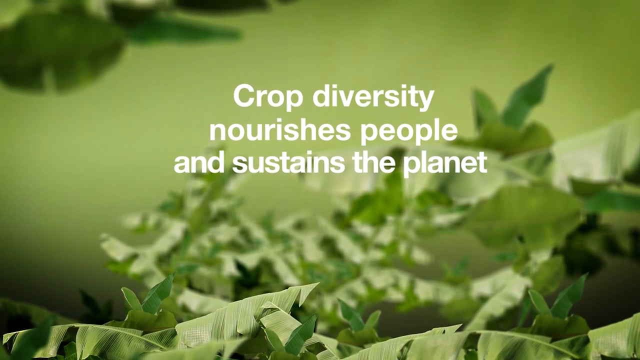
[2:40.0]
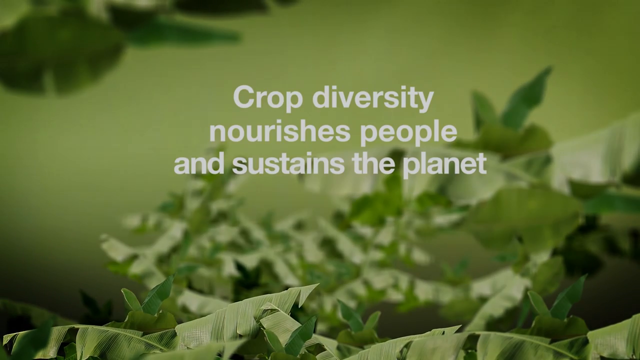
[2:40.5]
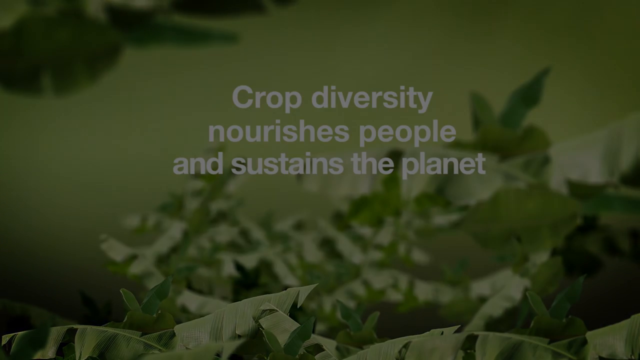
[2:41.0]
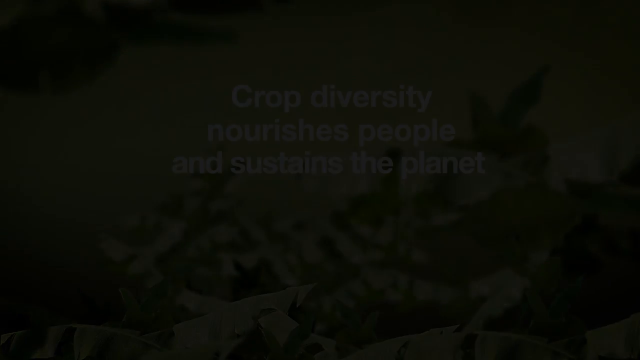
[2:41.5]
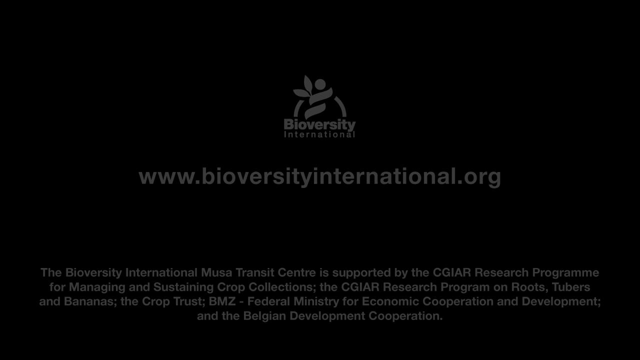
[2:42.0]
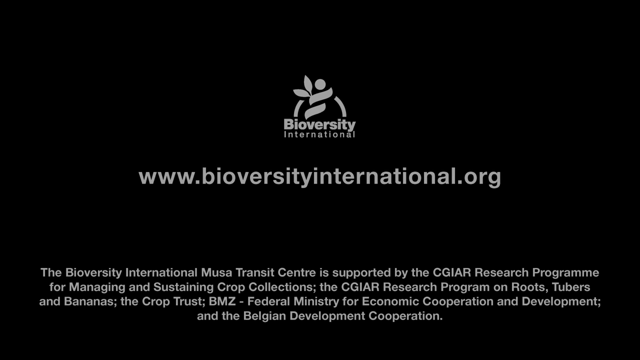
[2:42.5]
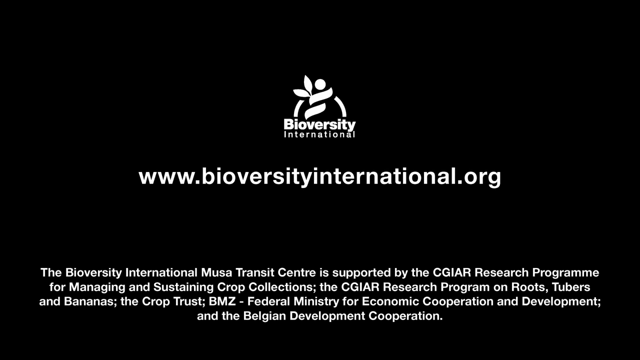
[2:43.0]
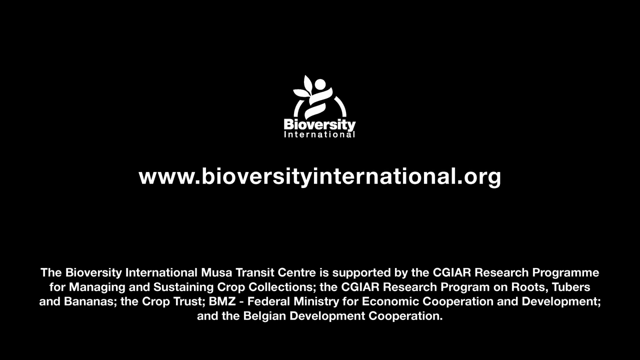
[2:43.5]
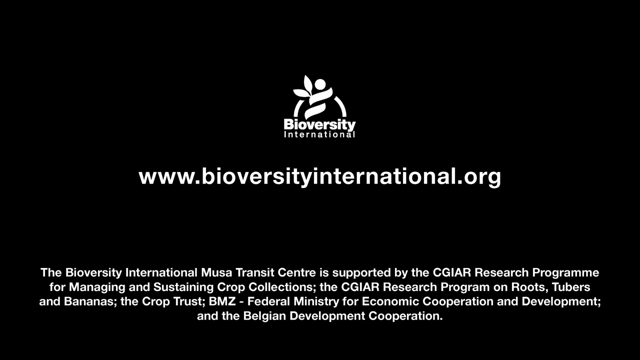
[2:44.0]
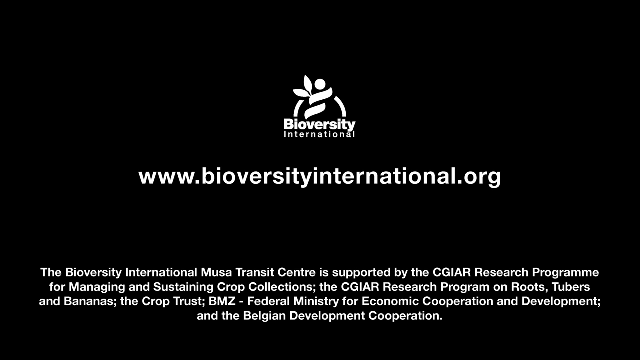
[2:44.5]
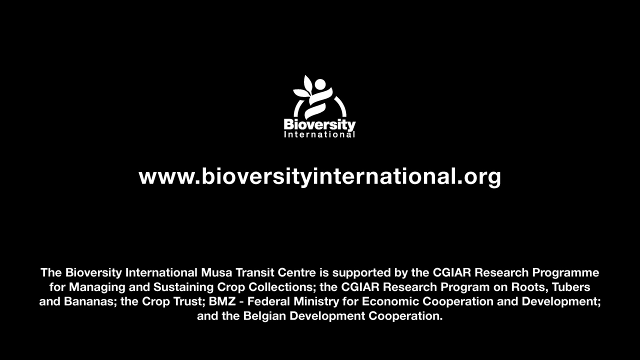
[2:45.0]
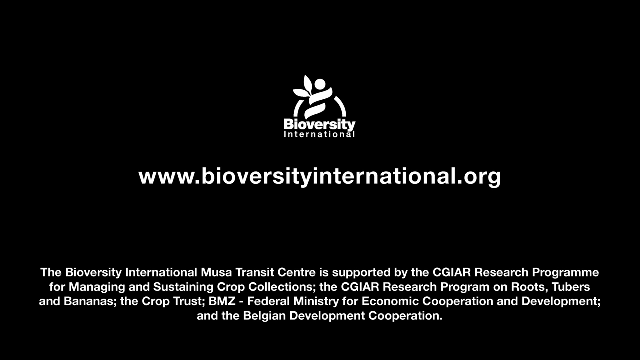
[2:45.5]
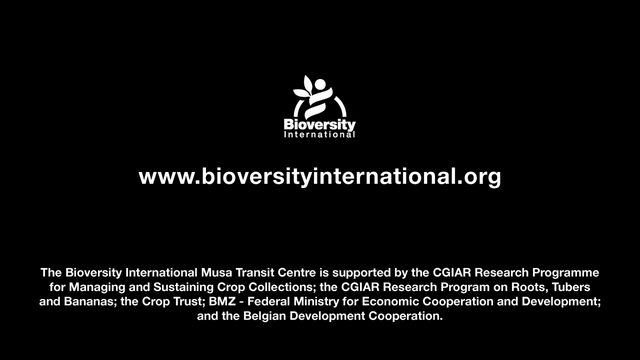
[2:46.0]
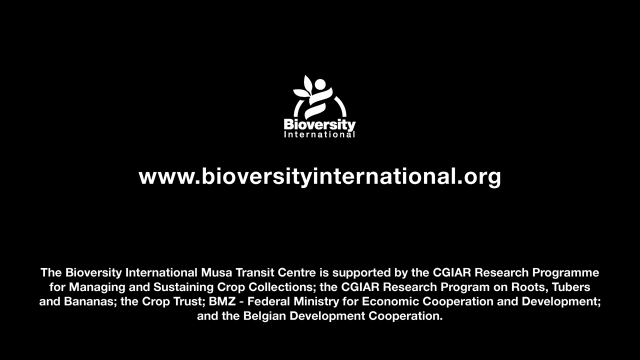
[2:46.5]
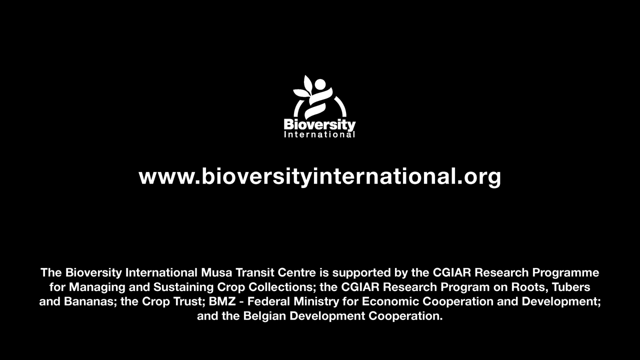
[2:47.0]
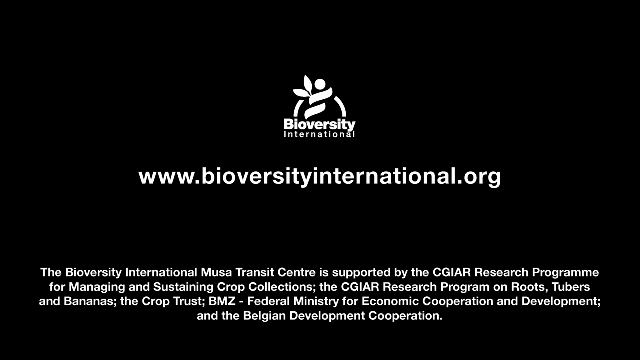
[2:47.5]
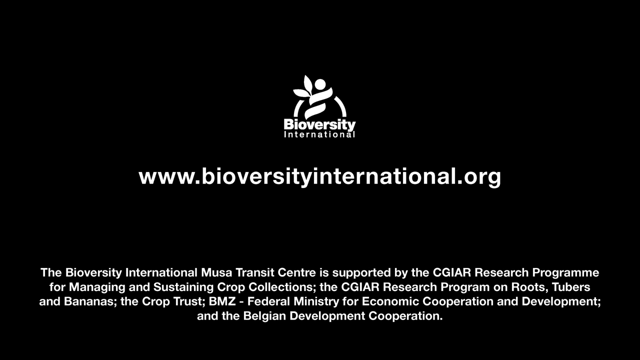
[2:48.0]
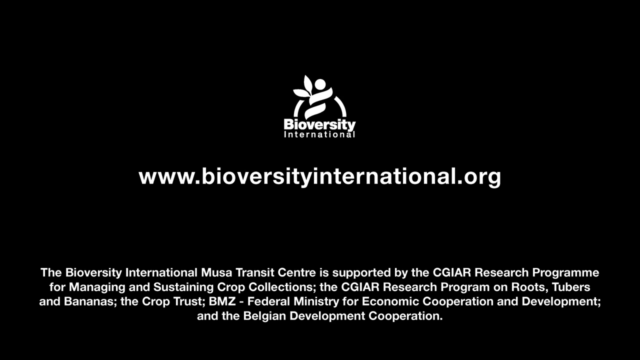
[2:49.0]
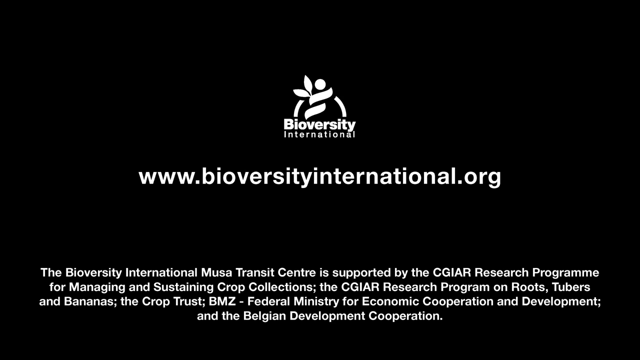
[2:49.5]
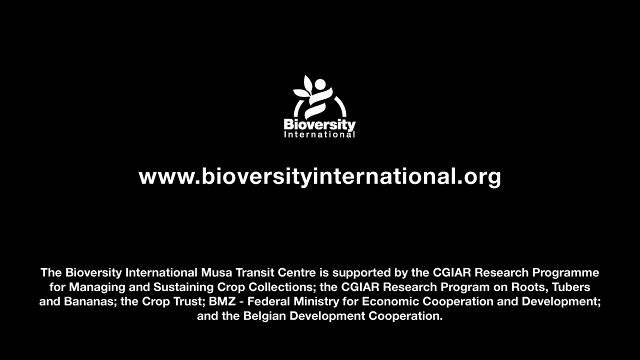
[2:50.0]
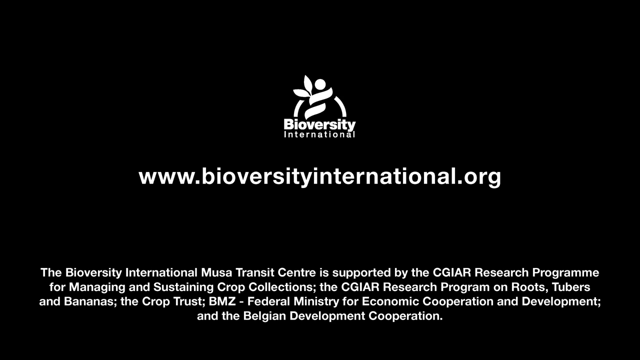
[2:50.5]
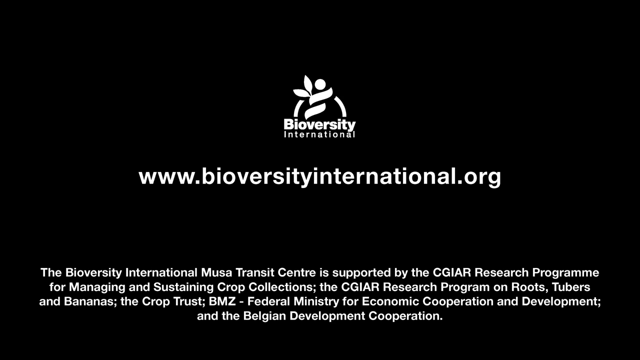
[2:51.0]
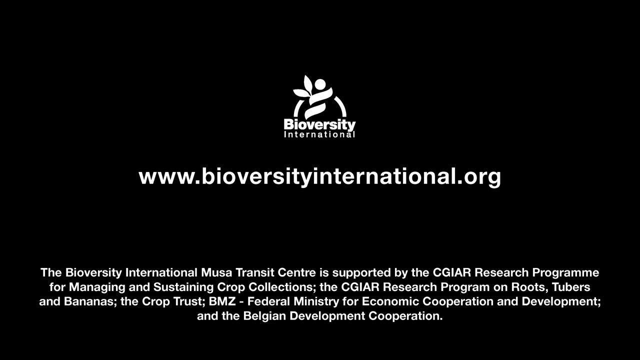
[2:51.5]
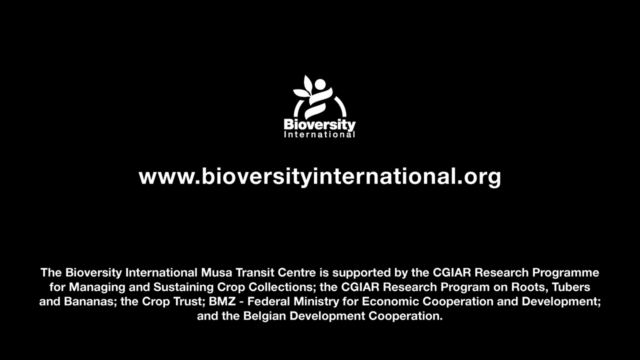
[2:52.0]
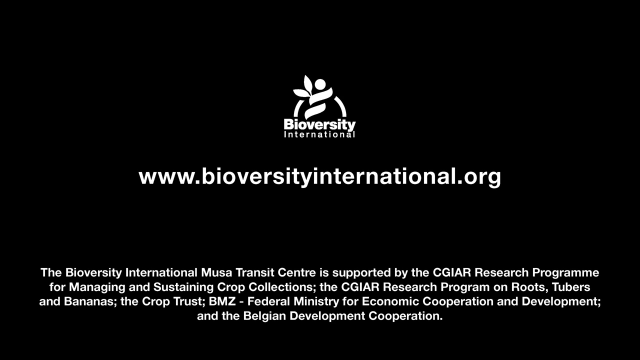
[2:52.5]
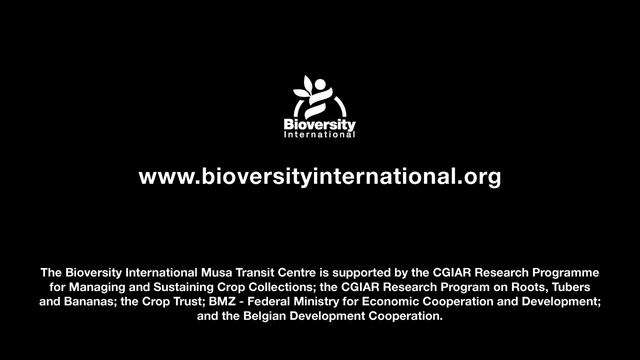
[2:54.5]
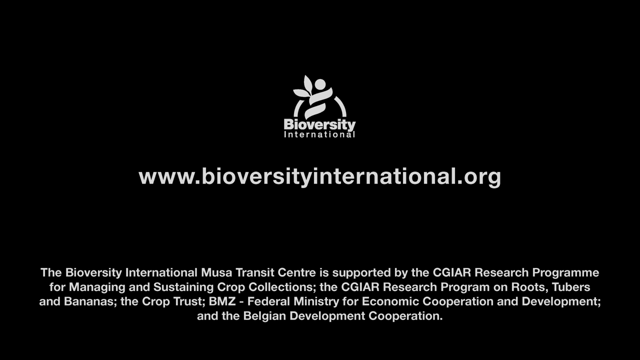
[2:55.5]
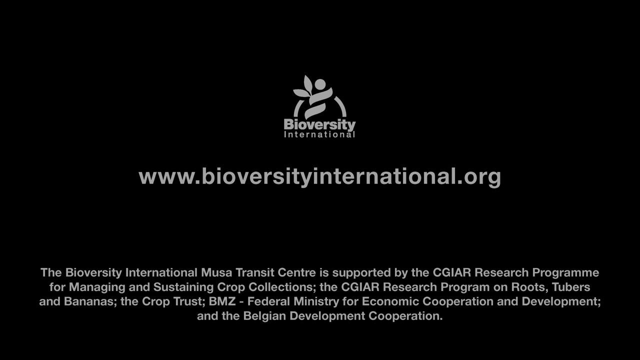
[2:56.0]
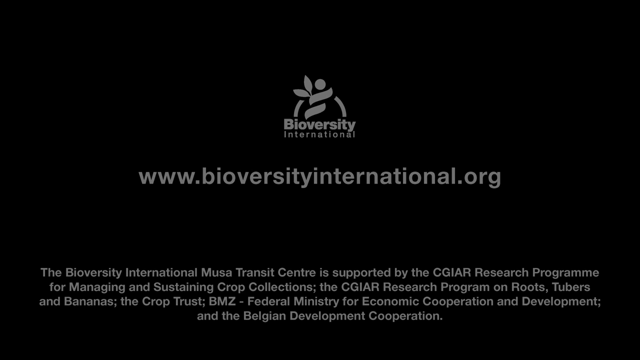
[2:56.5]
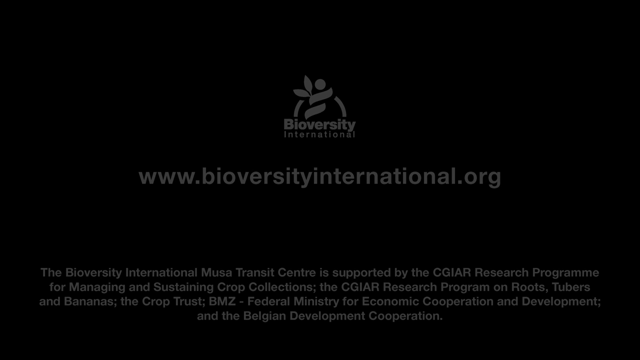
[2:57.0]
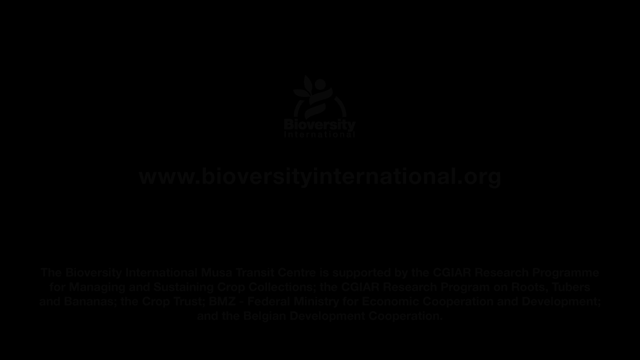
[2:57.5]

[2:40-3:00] The white text "crop diversity nourishes people and sustains the planet" is on screen over green leaves, then fades to black. The logo for Bioversity International appears, followed by the web address "www.bioversityinternational.org". Text at the bottom of the screen reads "the Bioversity International MUSA Transit Center supported by the CGIAR Research Program for Managing and Sustaining Crop Collections, the CGIAR Research Program on Roots, Tubers, and Bananas", followed by "BMZ Federal Ministry for Economic Cooperation and Development, and the Belgian Development Cooperation", all in white font on a black background. The screen then fades to black.